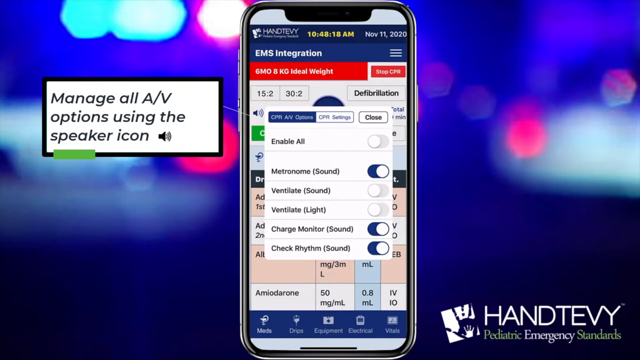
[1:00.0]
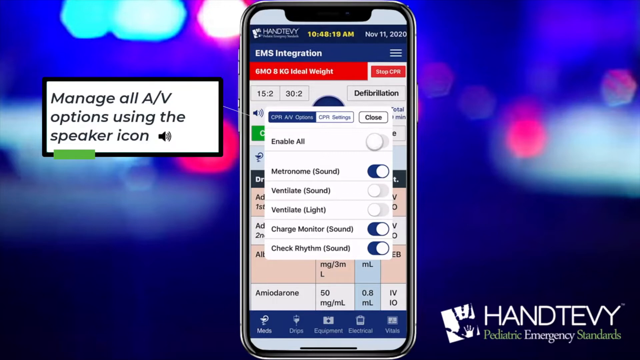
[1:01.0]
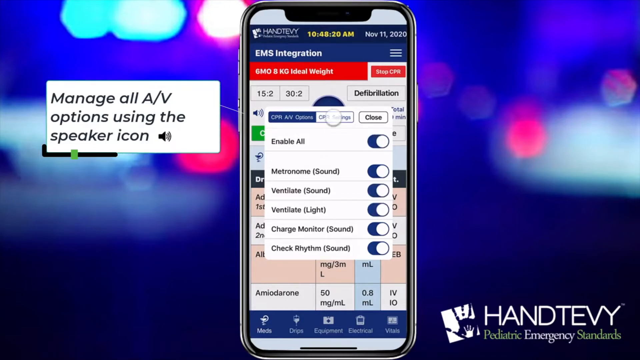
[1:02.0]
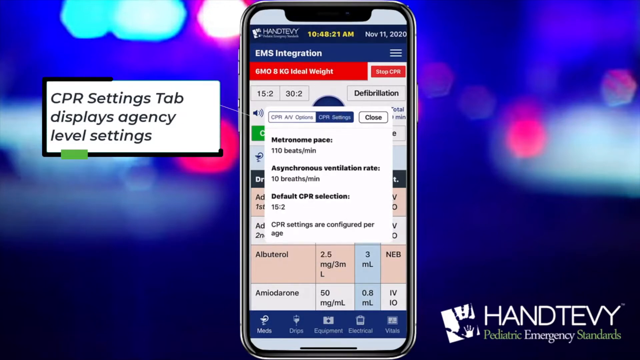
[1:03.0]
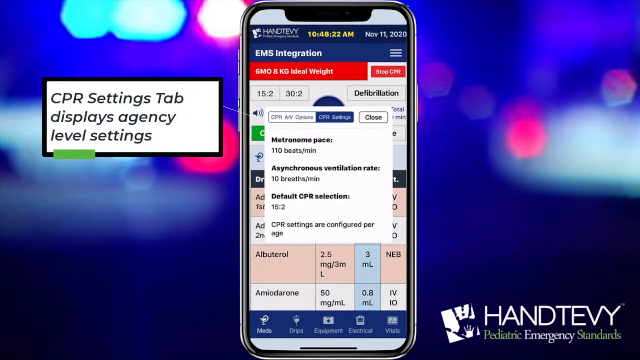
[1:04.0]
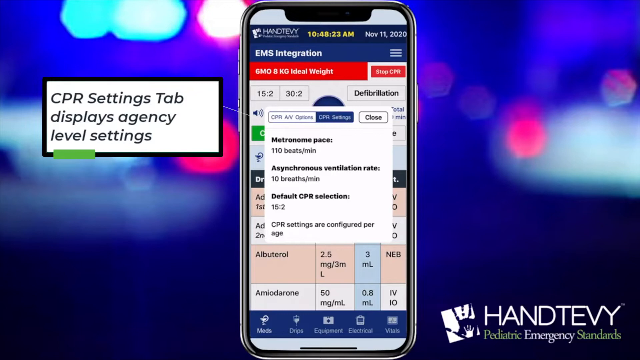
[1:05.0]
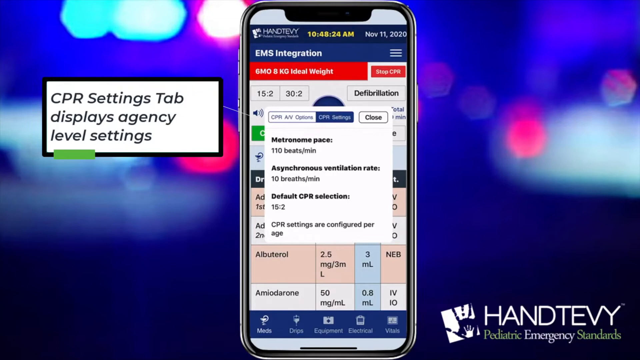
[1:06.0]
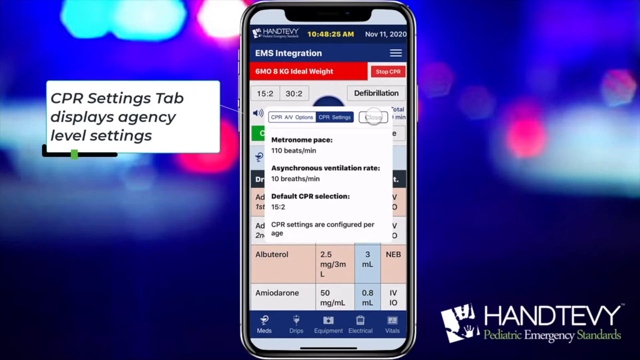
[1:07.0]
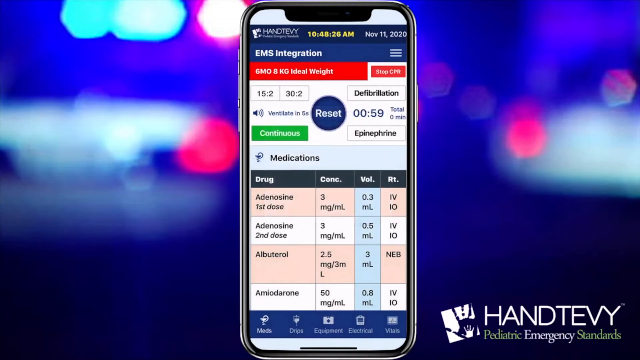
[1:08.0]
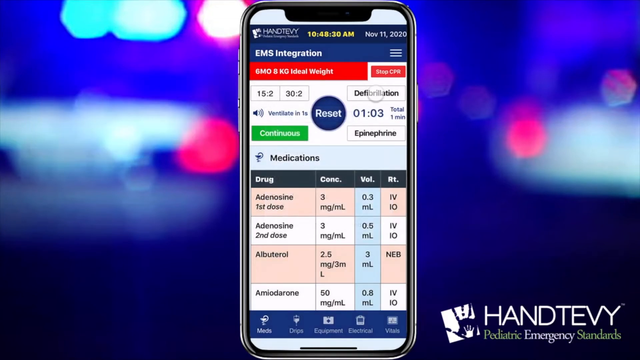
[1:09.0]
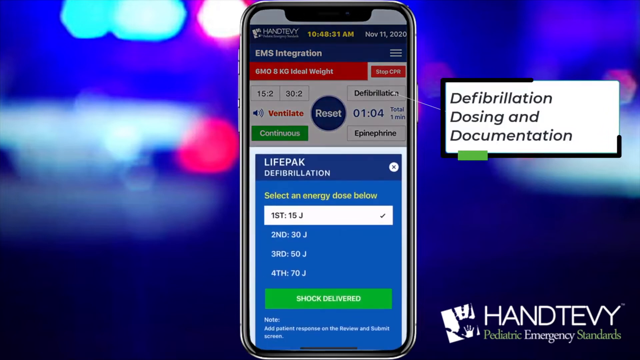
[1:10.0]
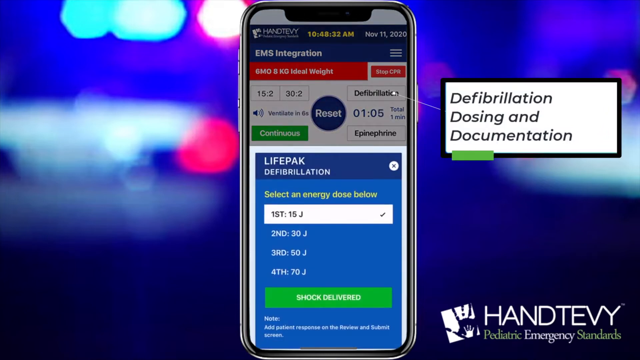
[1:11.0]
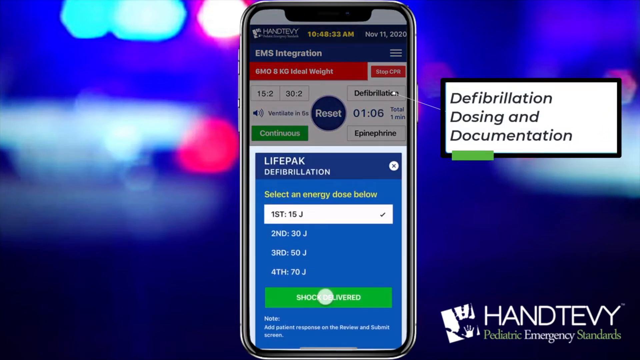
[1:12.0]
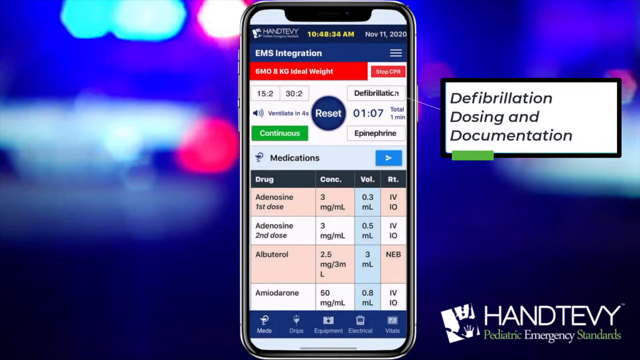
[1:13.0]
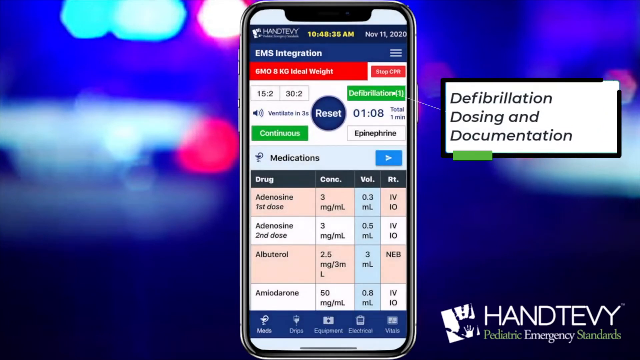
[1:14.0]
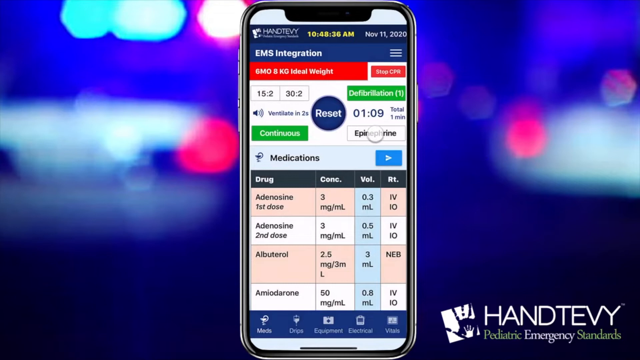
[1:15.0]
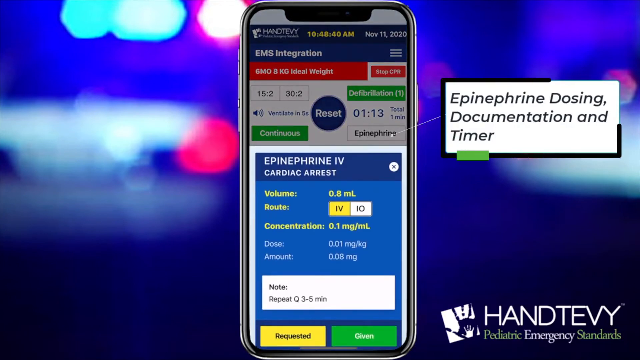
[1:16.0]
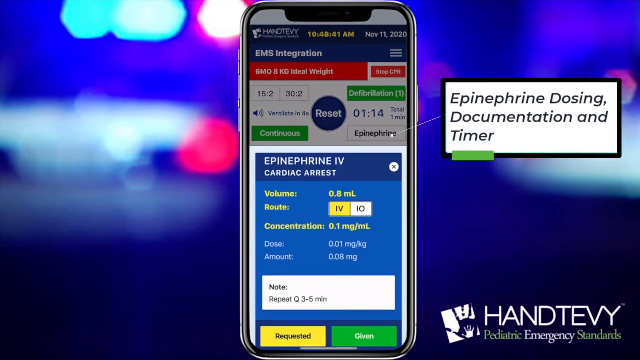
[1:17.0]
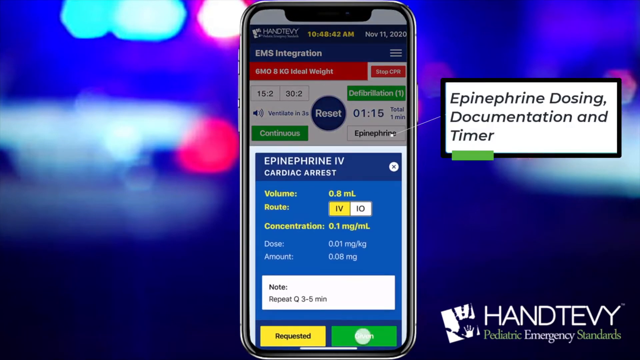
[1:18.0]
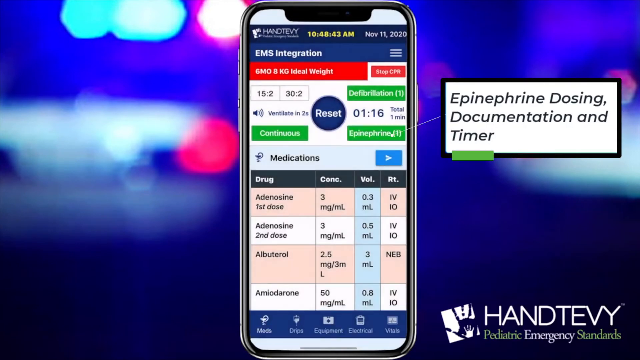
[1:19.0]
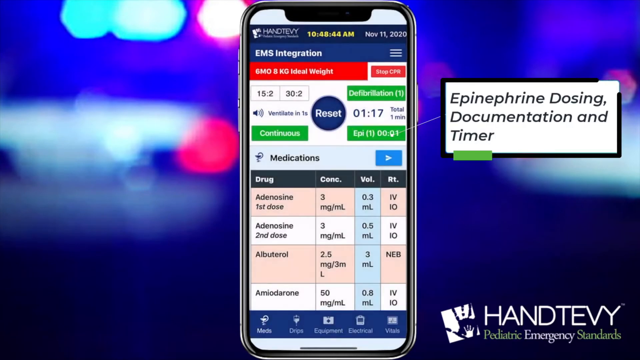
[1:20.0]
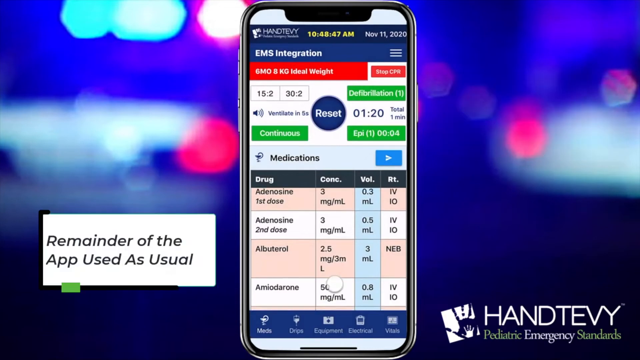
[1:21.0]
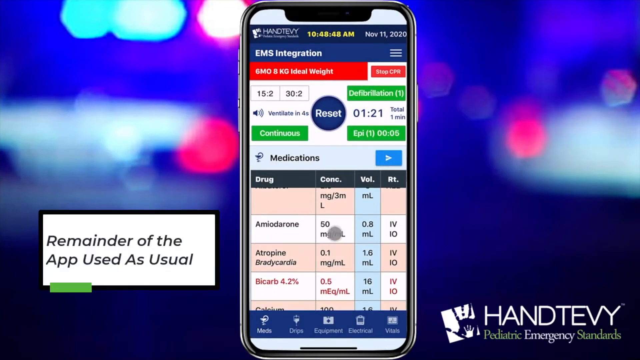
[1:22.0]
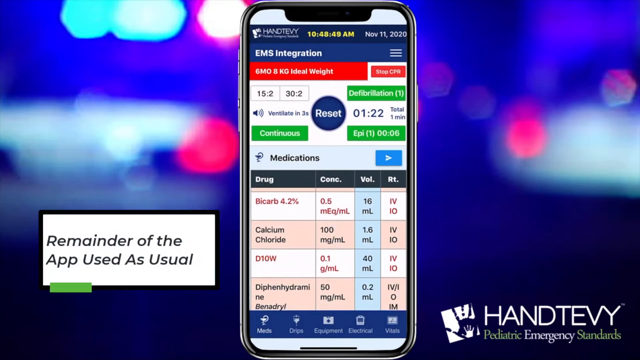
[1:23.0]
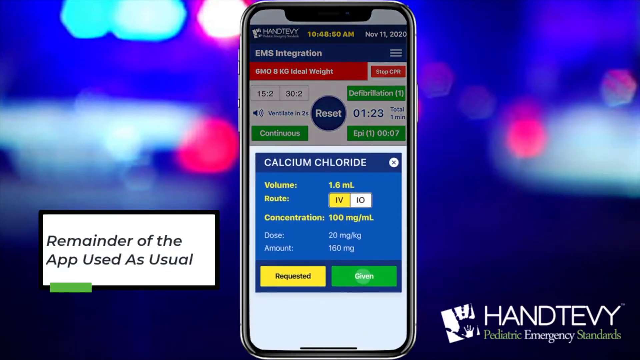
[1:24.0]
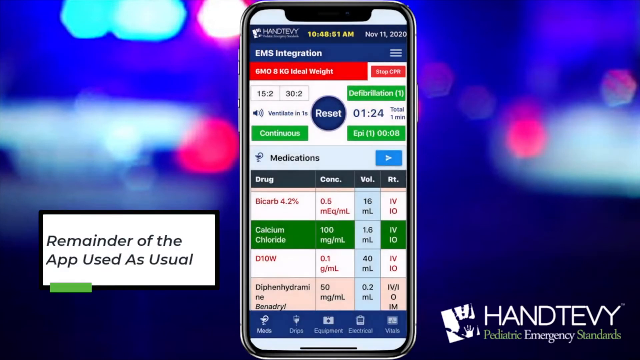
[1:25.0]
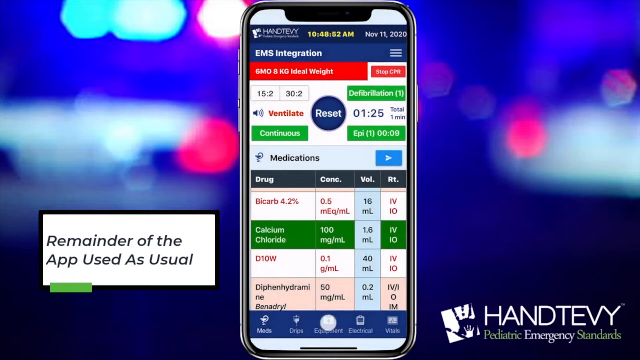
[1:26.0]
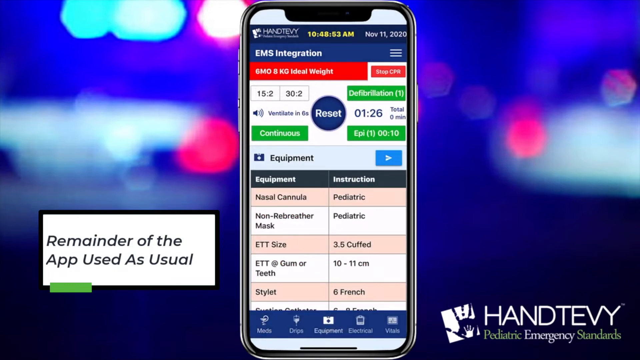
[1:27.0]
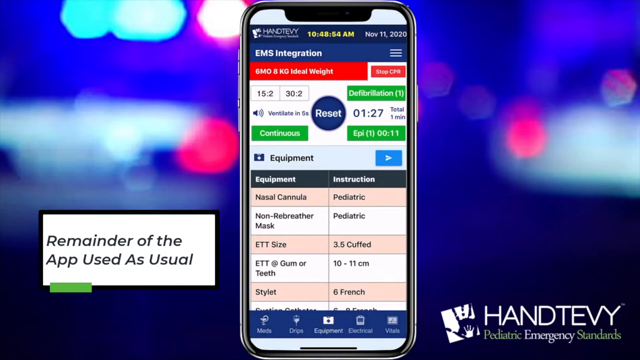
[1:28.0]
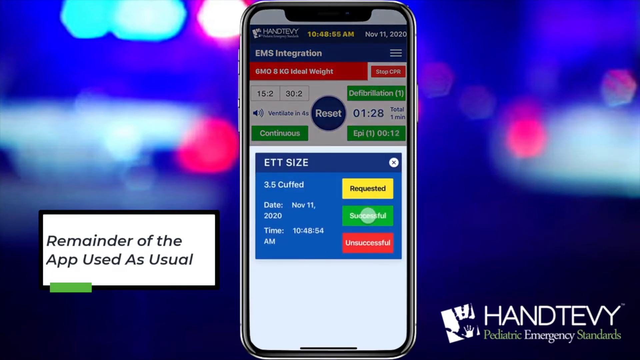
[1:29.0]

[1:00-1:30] An iPhone screen is displayed running an app that assists EMS workers. On the left side of the screen, a text box reads "Manage all A/V options using the speaker icon." In the lower right corner is the company name, Handtevy Pediatric Emergency Standards, next to a graphic that looks like a child's handprint inside a white box; inside the blue handprint is a smaller white handprint. The app is used as different screens pop up on the iPhone, and another text box appears on the right reading "CPR Settings Tab displays agency level settings," "Defibrillation Dosing and Documentation." This disappears and another box appears reading "Epinephrine Dosing, Documentation, and Timer." As each box appears, a line is drawn from the box to a different feature on the phone screen. Another box appears in the lower left corner reading "Remainder of the app used as usual."